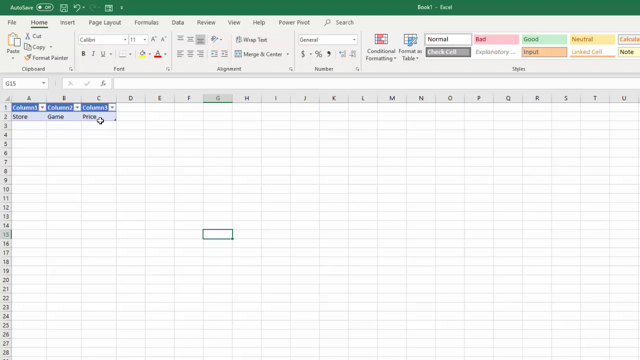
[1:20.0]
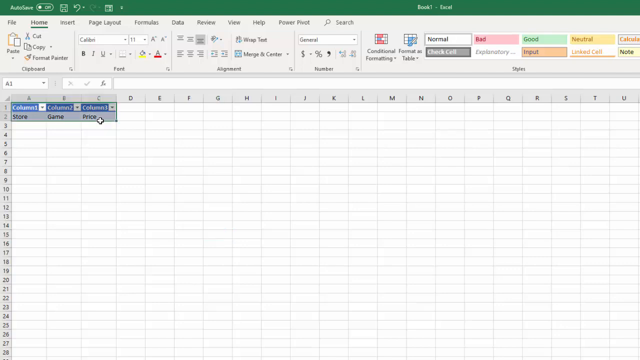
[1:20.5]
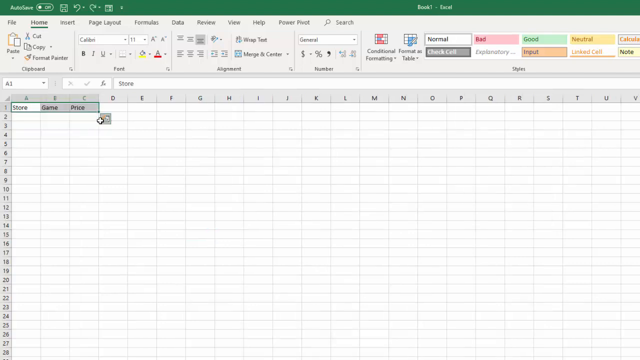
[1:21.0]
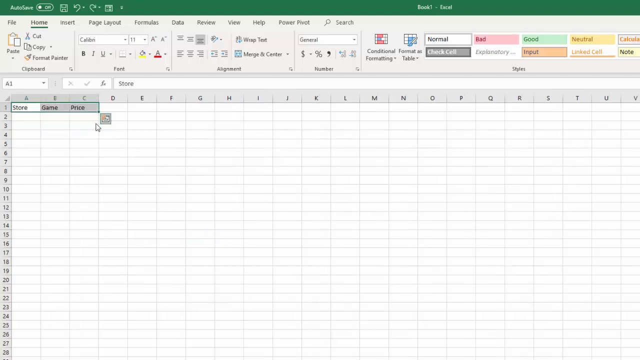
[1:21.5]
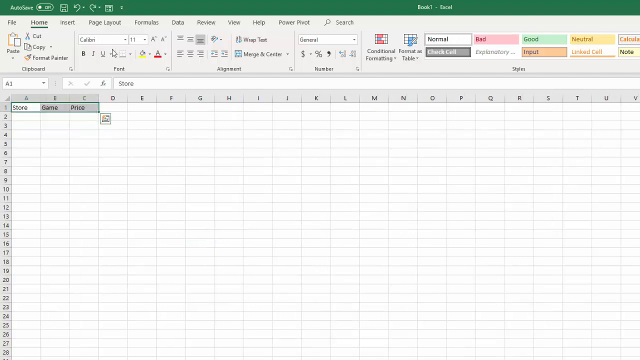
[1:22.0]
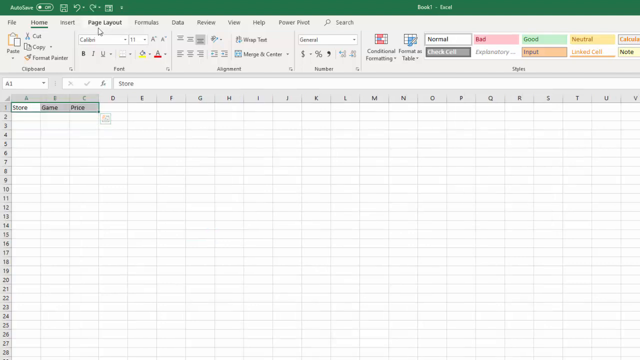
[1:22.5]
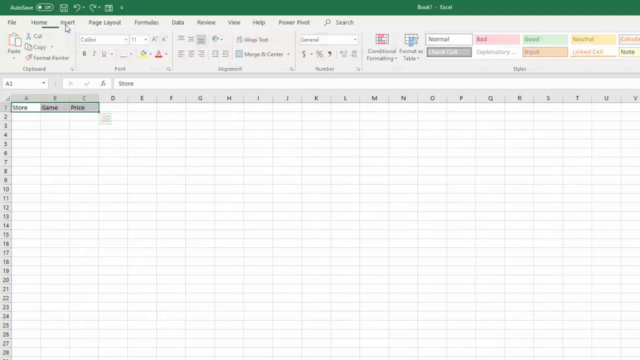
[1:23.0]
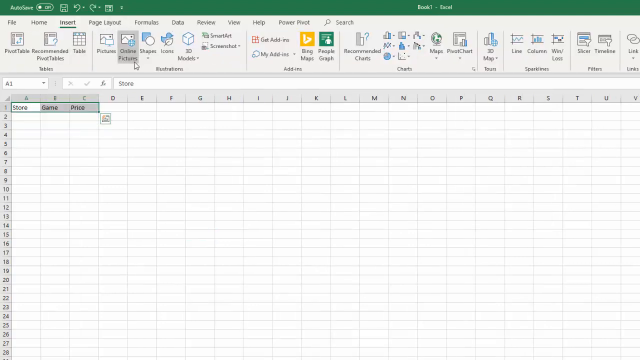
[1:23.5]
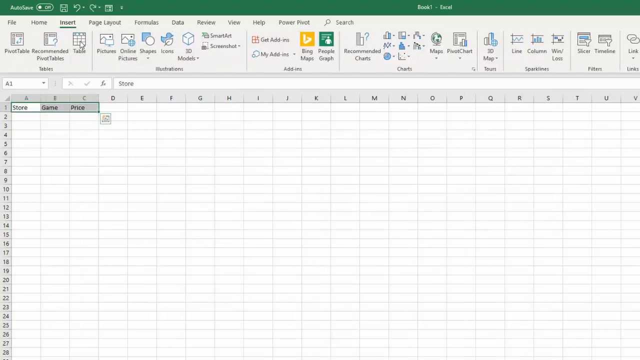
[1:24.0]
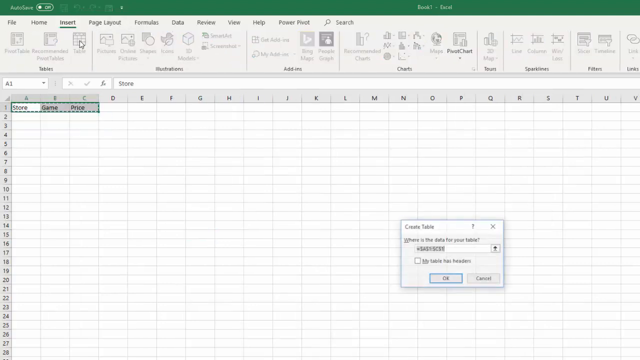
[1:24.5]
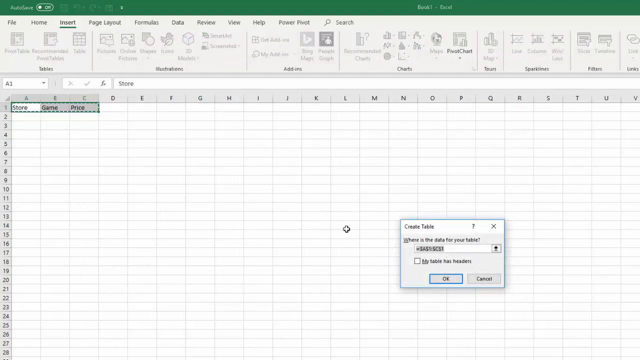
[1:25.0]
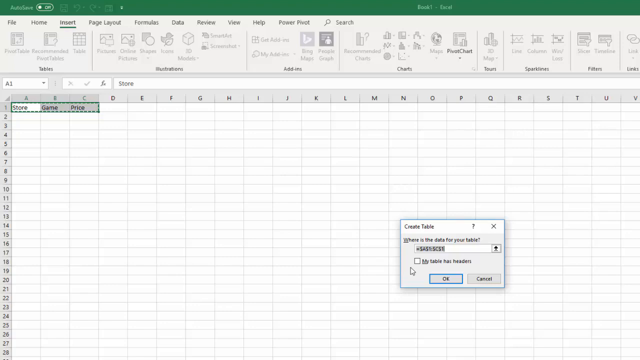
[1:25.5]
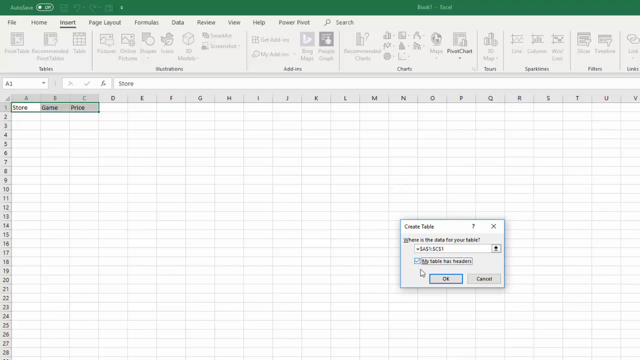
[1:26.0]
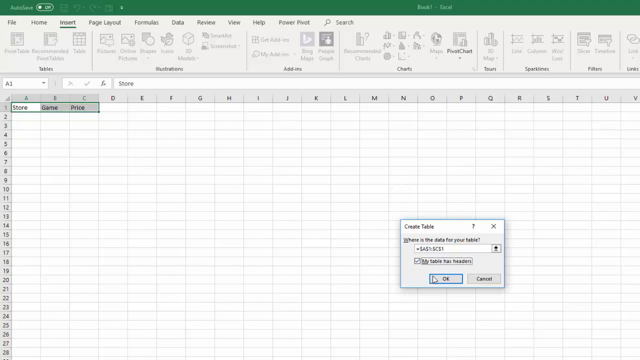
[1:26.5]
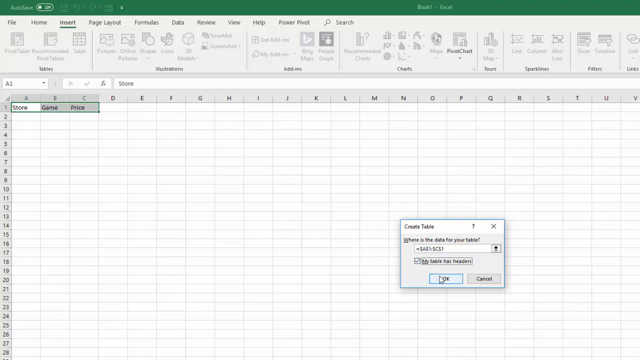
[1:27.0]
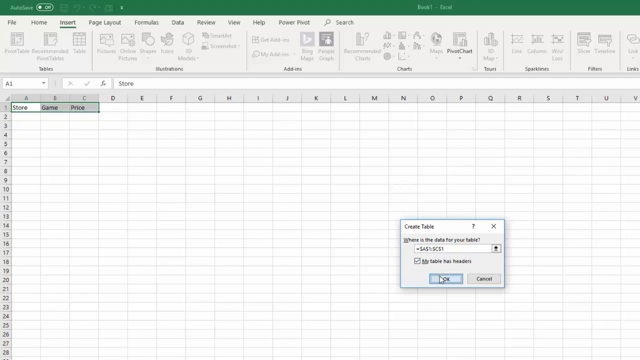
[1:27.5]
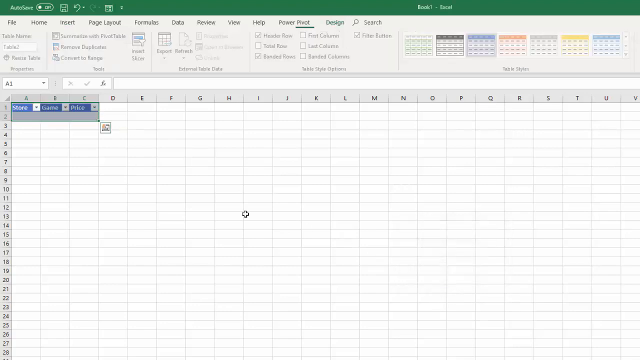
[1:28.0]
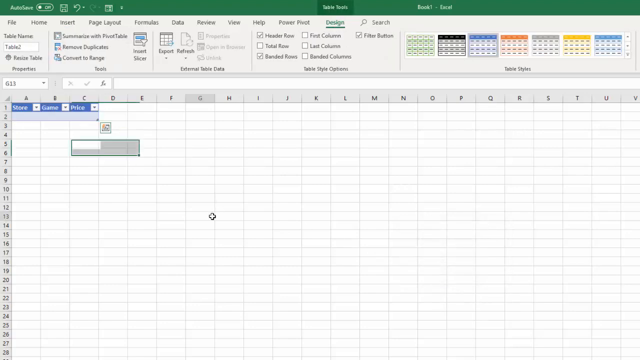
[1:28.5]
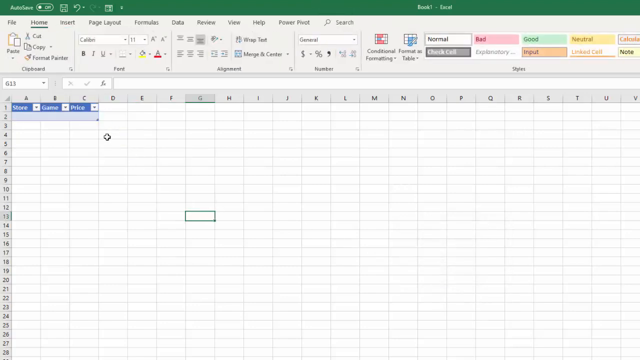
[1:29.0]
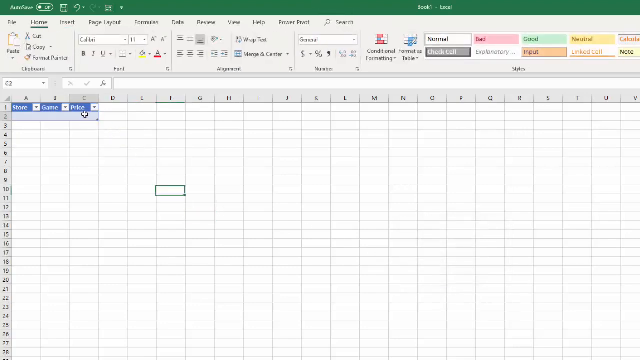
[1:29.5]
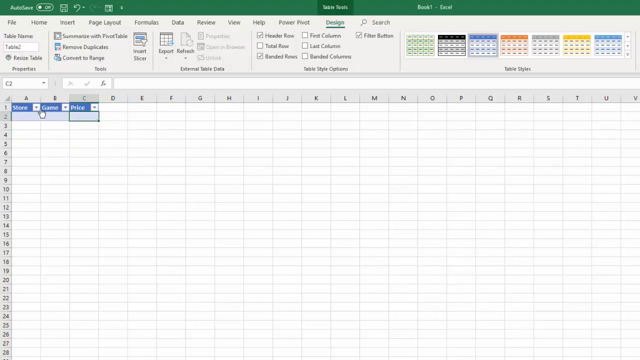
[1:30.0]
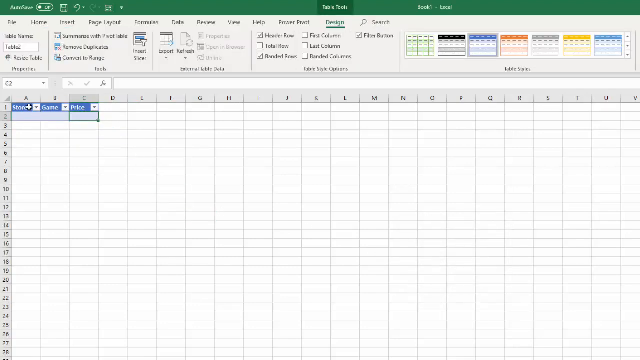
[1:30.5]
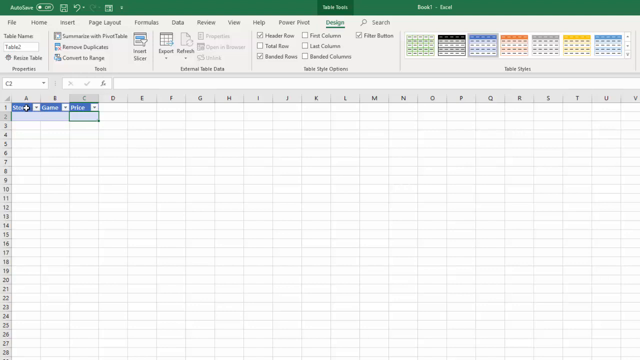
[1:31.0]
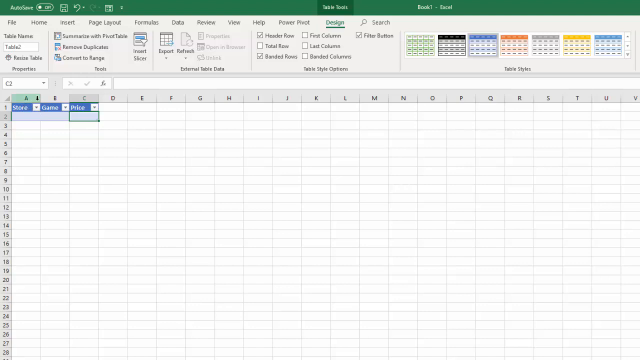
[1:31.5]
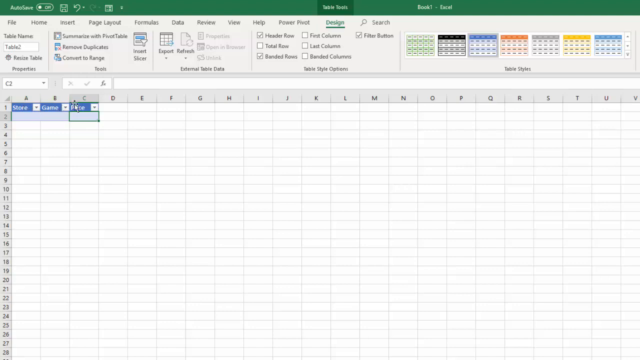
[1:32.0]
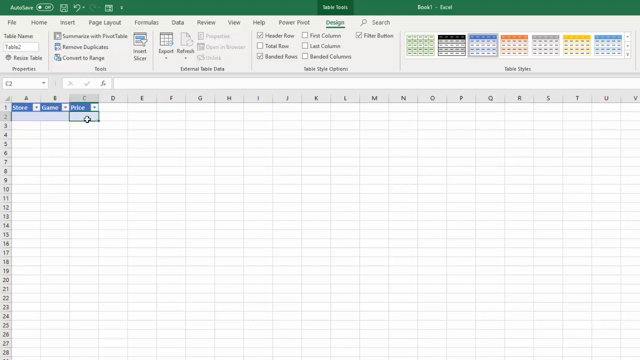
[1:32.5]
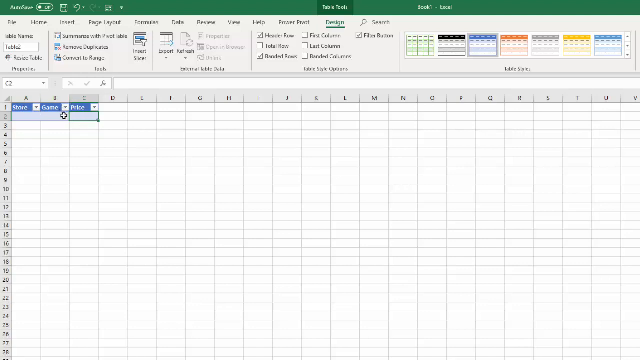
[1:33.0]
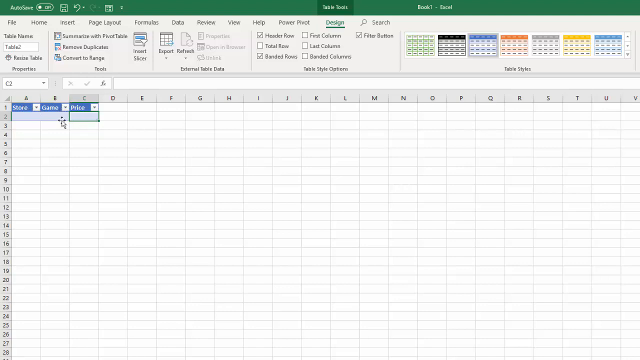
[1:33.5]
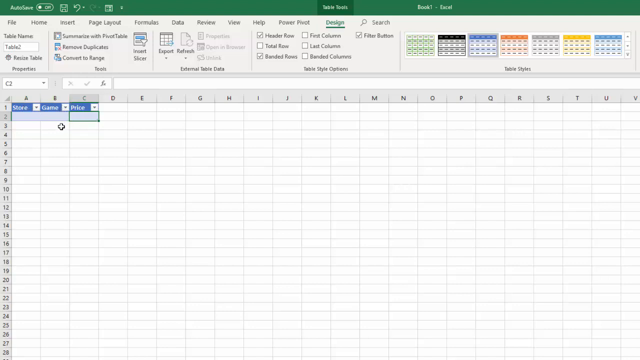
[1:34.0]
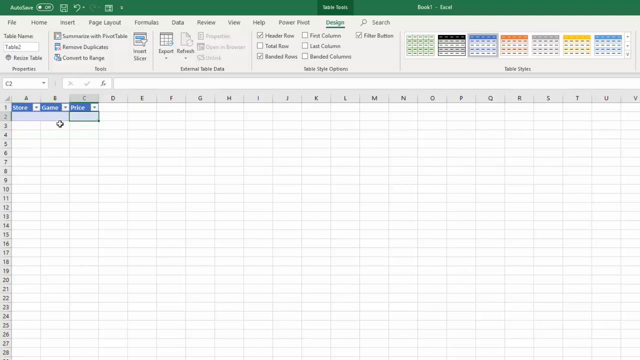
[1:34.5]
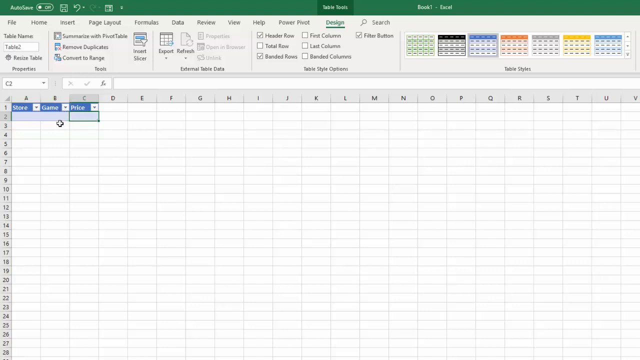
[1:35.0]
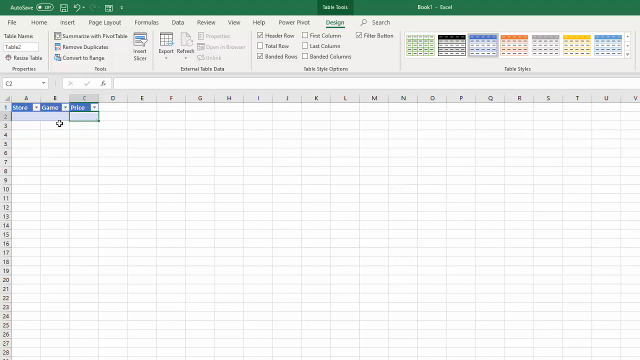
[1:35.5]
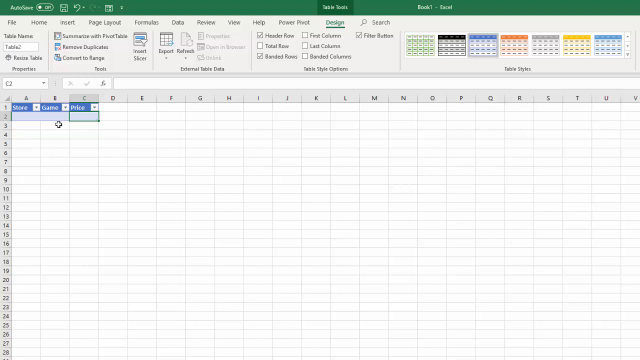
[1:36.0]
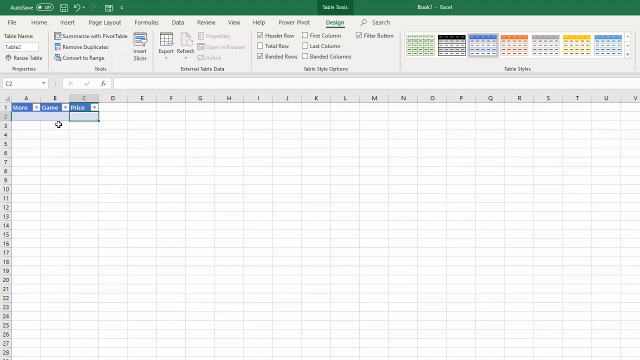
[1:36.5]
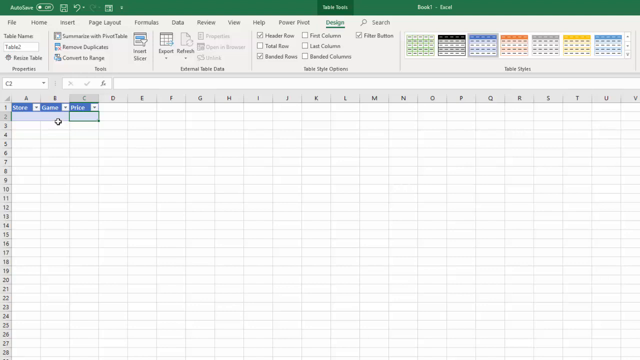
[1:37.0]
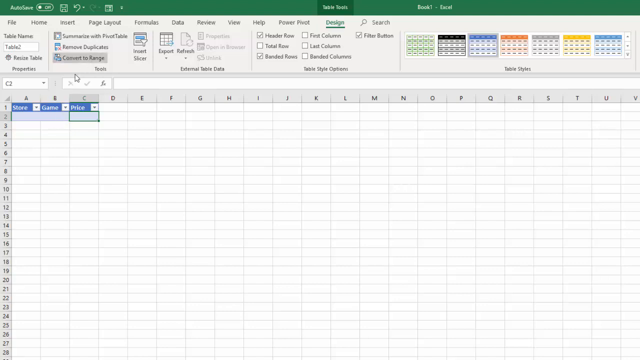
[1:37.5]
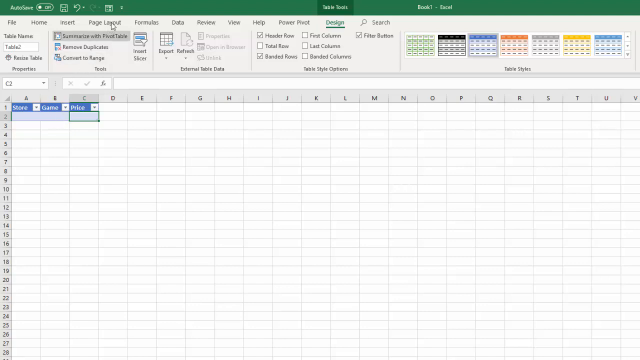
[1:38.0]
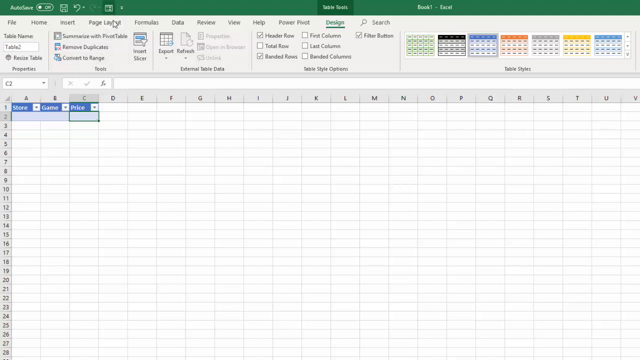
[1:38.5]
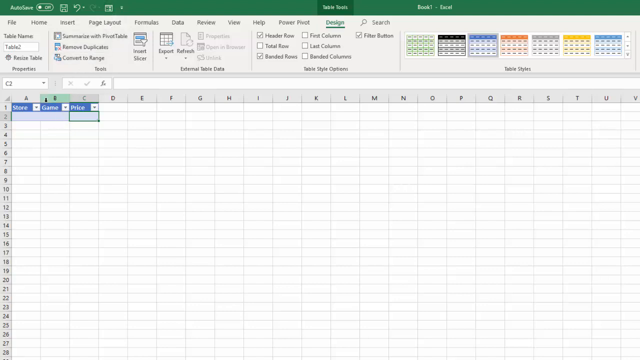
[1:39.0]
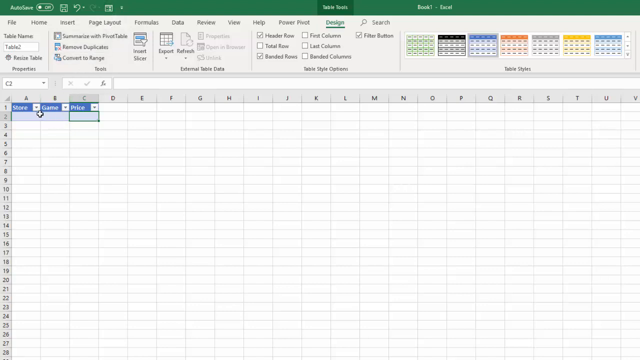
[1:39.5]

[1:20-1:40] The user undoes the table they just created, so price, game and store are back in A1, B1 and C1. They go to the Insert tab and click Table again, and this time, in the Create Table window, they tick a checkbox that says "My table has headers," which apparently fixes the problem. After they click OK, the headers are now the game, price and store text. Below them, A2, B2 and C2 show bluish highlighted areas that are empty.